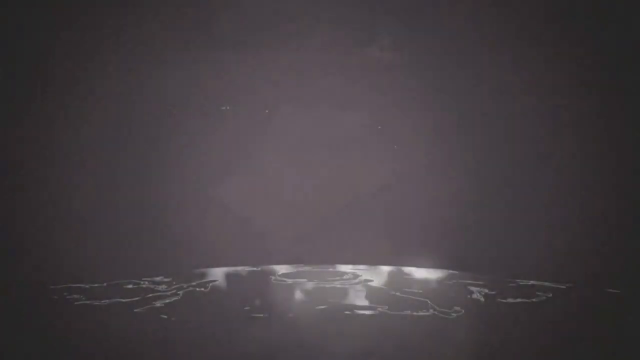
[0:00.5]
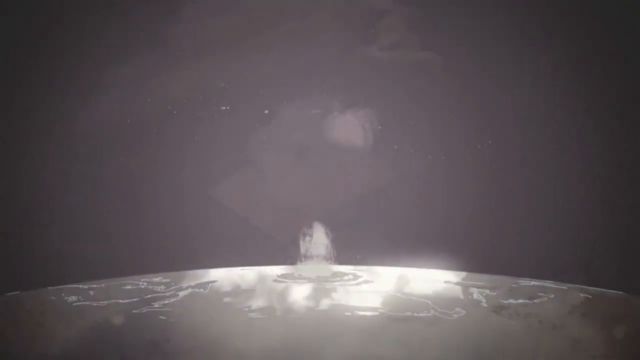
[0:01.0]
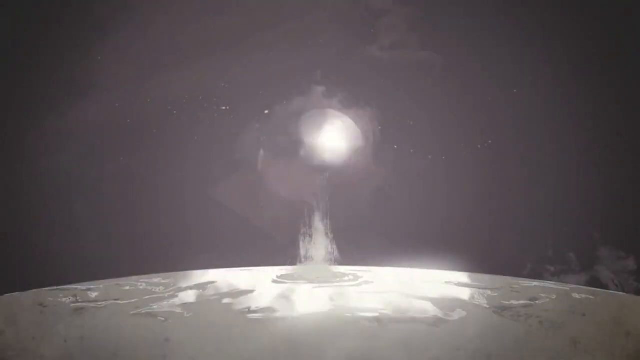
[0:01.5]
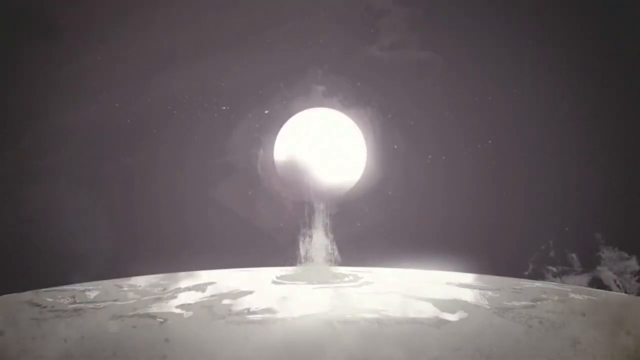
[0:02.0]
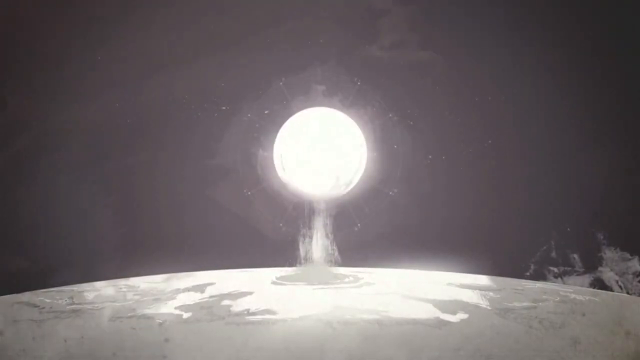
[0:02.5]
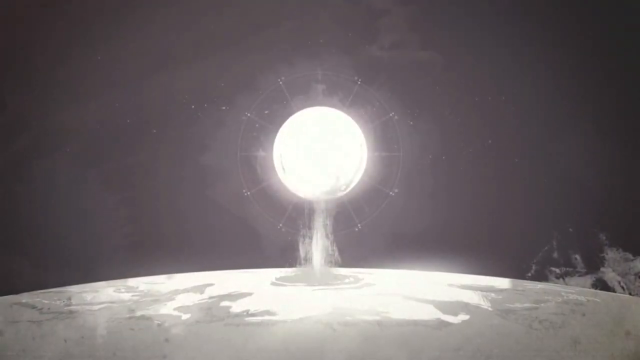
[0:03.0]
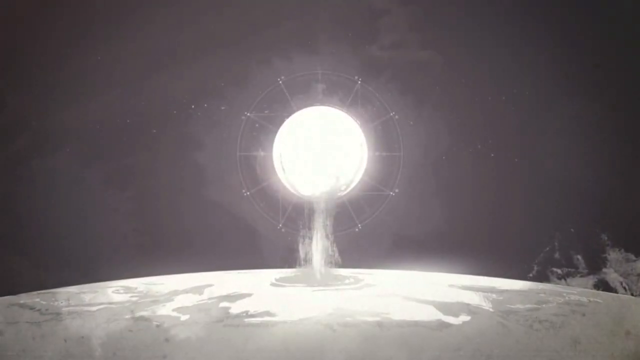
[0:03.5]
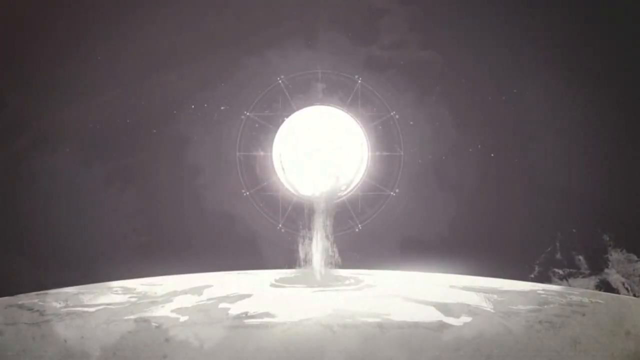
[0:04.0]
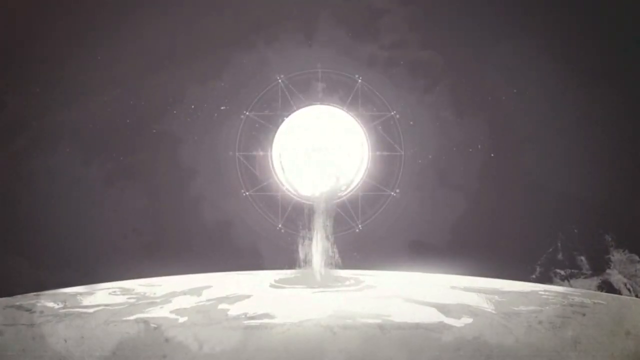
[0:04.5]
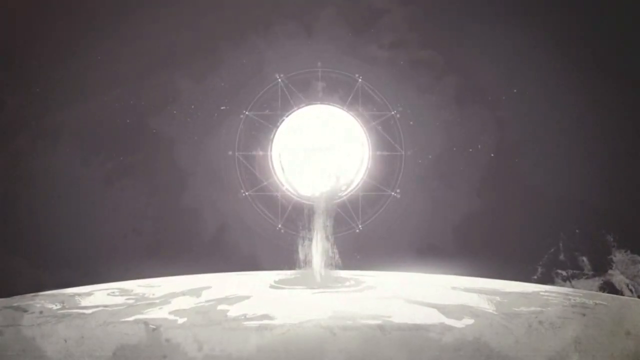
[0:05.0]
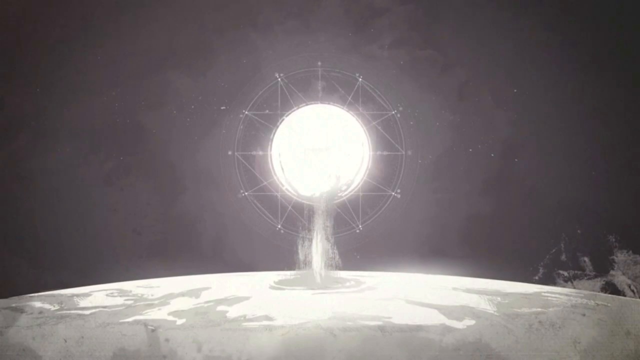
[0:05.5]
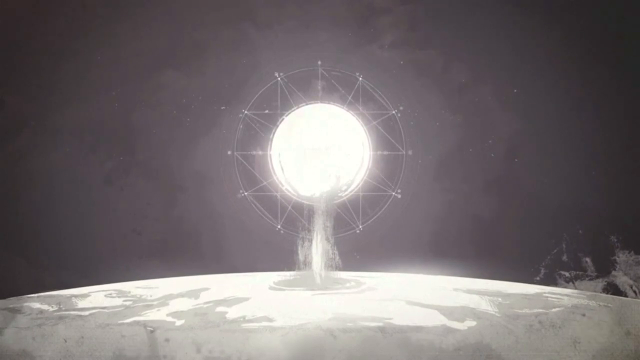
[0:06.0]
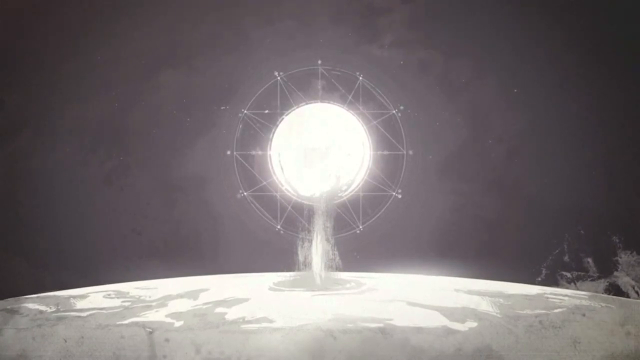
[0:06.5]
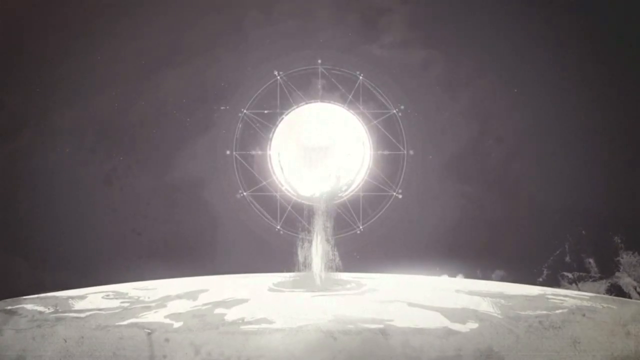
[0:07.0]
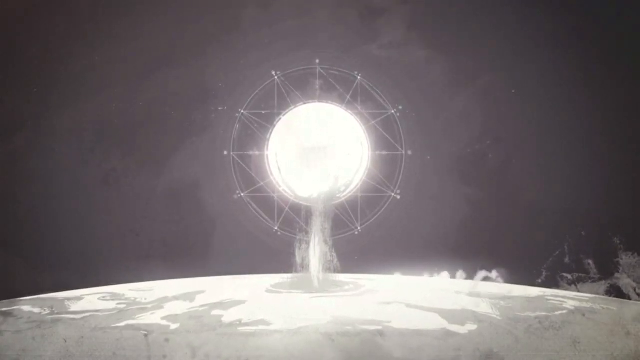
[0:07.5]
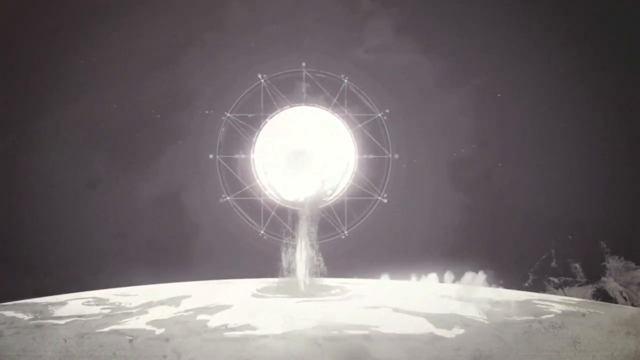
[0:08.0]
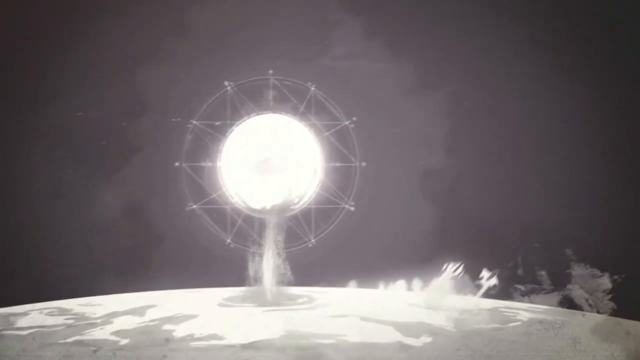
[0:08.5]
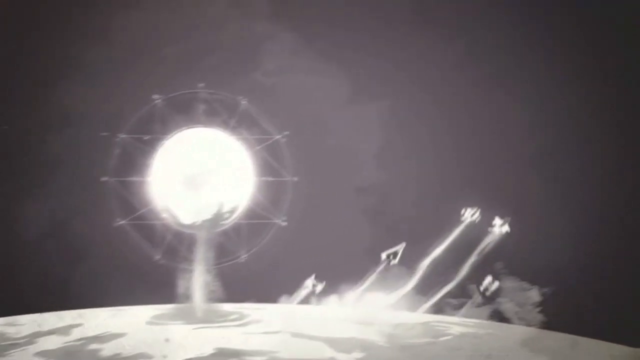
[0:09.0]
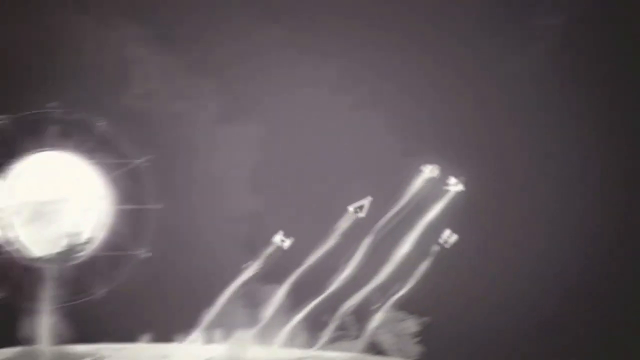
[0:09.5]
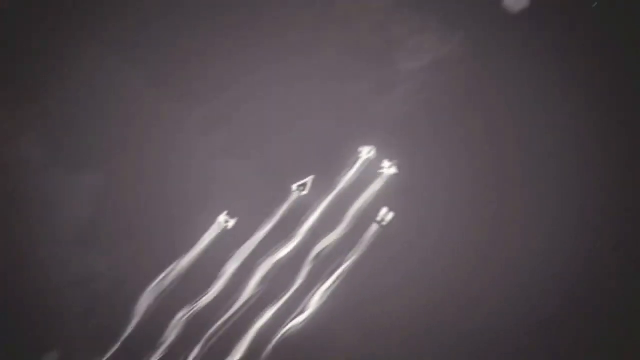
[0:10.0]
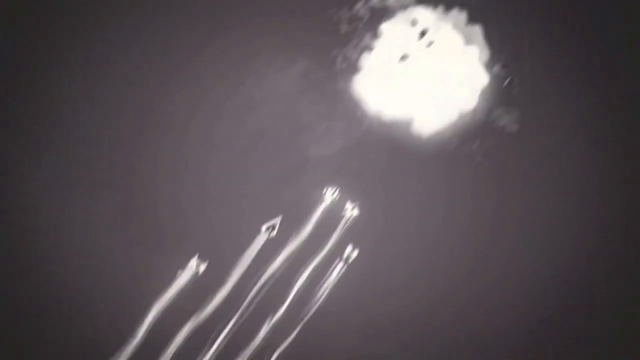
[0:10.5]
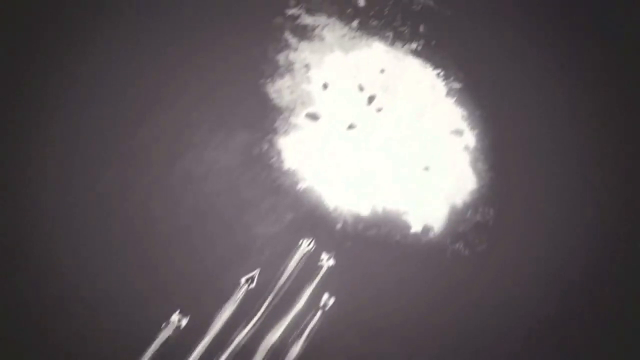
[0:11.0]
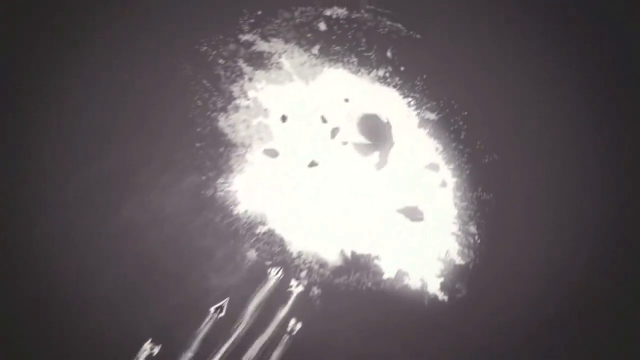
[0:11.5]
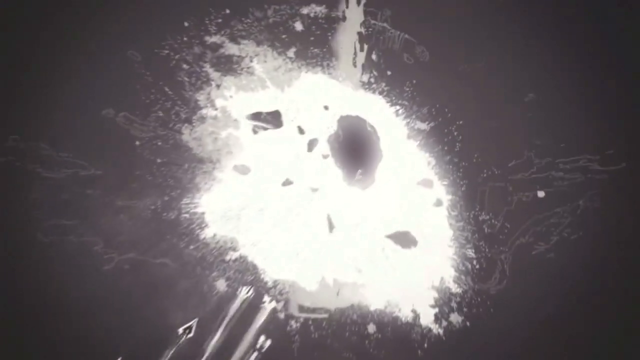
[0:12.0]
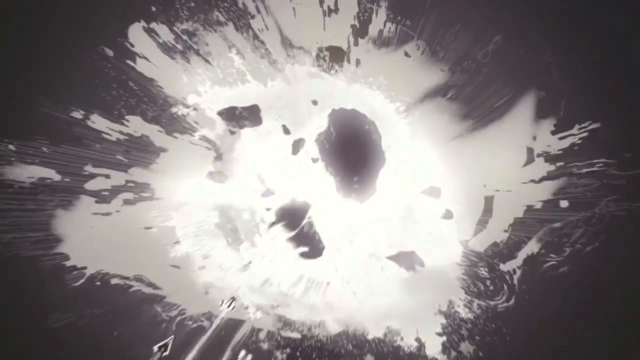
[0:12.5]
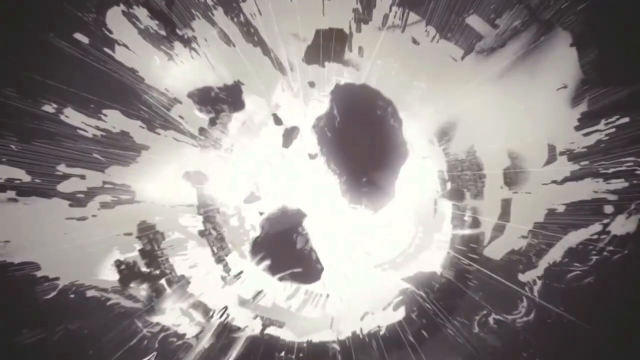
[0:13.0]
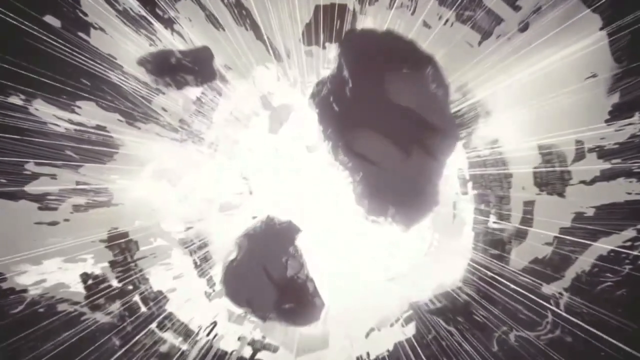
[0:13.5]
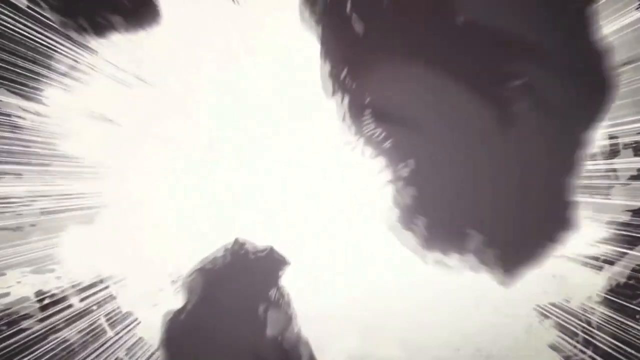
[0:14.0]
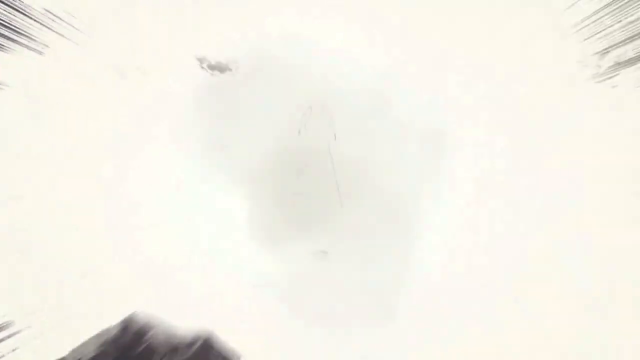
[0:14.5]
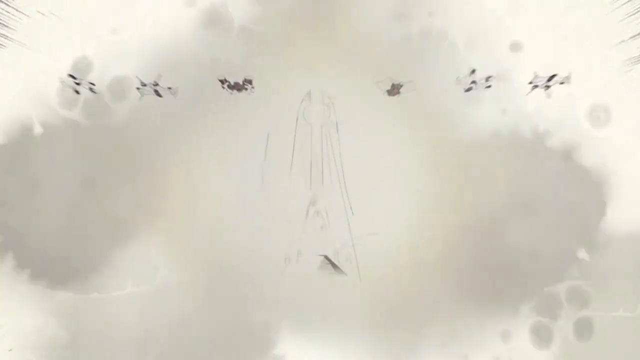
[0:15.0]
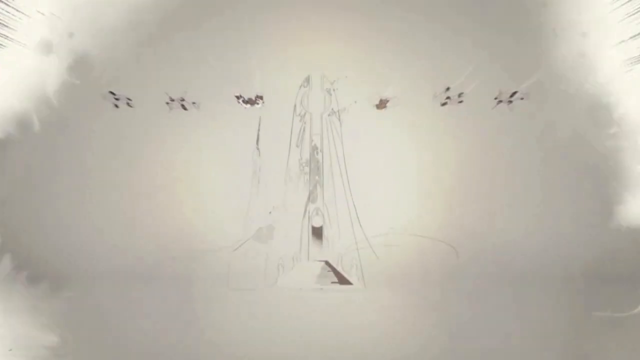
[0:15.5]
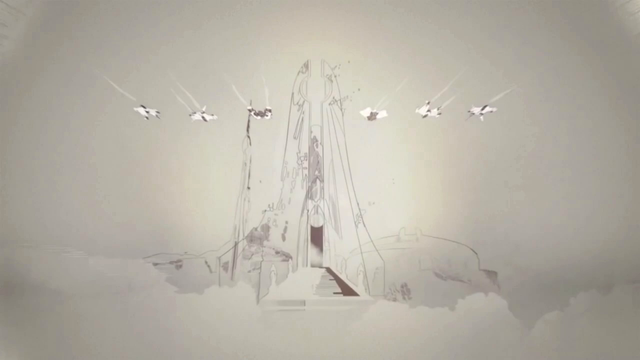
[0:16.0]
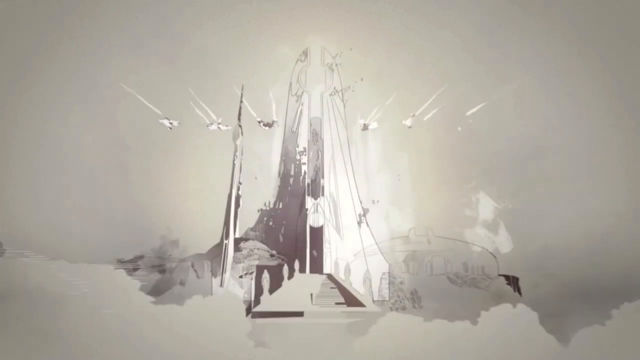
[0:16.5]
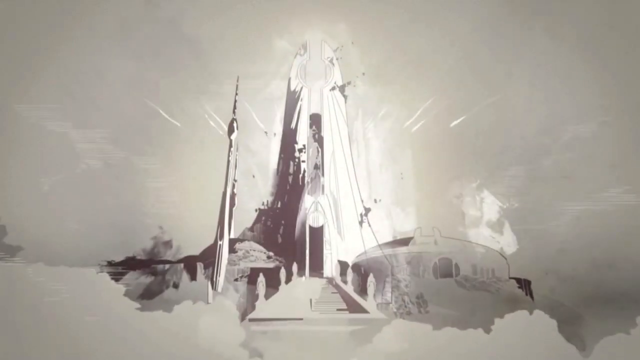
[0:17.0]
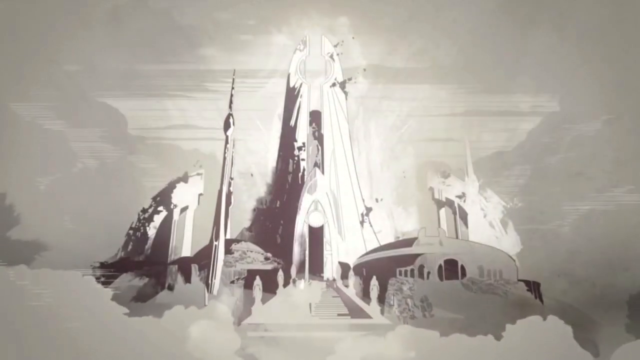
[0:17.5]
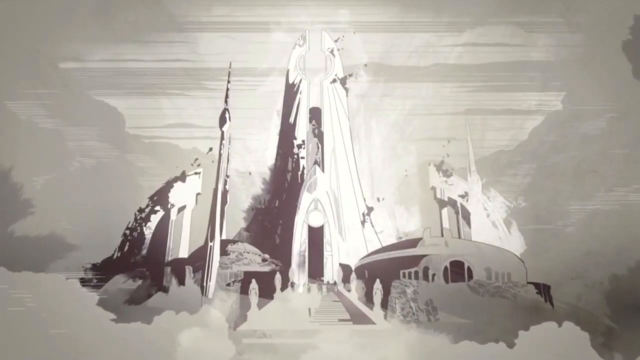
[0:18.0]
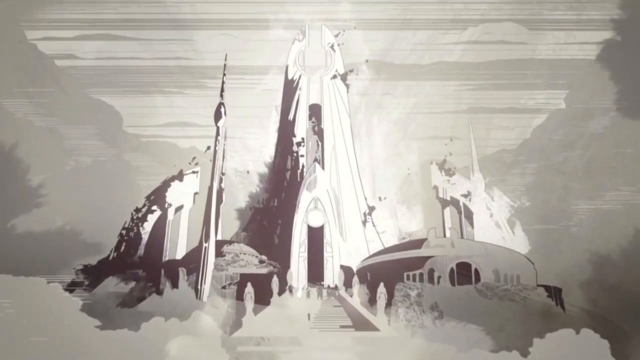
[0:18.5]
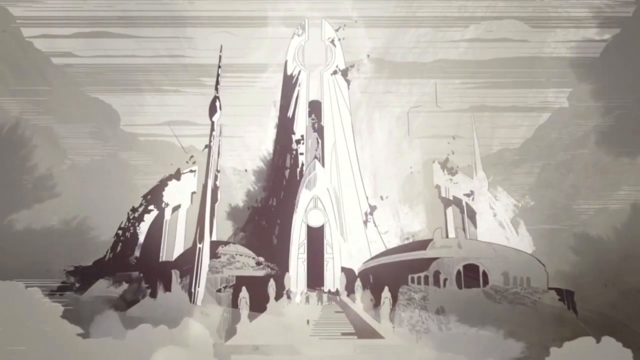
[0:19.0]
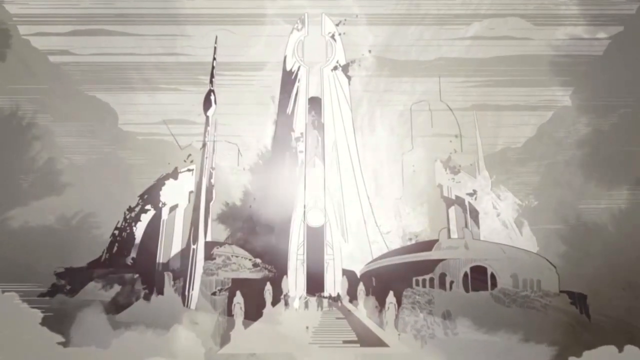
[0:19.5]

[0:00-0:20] A bulb of light with a stem attached to it is in the middle of the frame, lighting up the background. Rockets launch into the sky; there are five of them. They come out from beneath the ground, leaving dust and launching themselves into the air with rocks breaking off everywhere. An explosion happens in the sky, causing rocks to fly everywhere and scatter all over the screen. Next, six aircraft move towards a civilization that appears out of nowhere, and tall buildings and tall towers are sketched. Everything is in different shades of grey and seems to be sketched. The sky and the ground are both grey, but the sky is a darker shade.